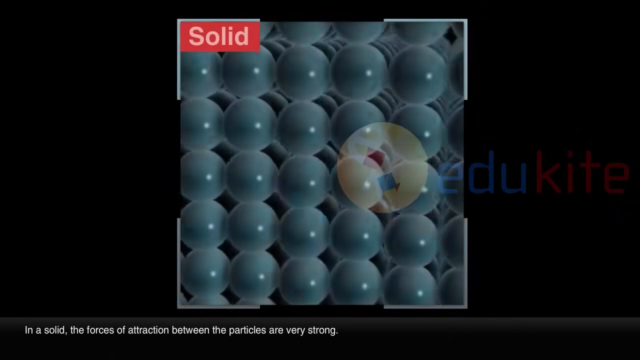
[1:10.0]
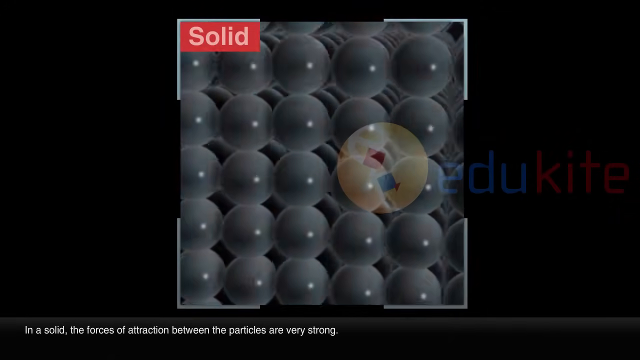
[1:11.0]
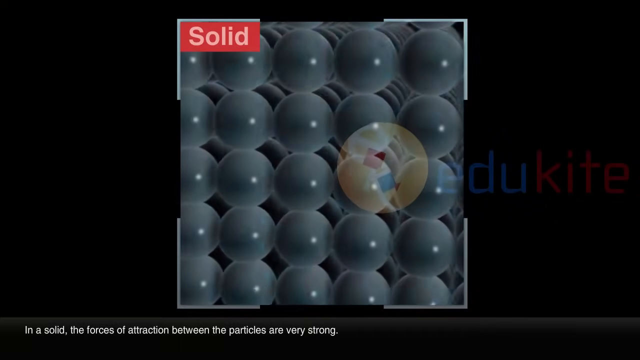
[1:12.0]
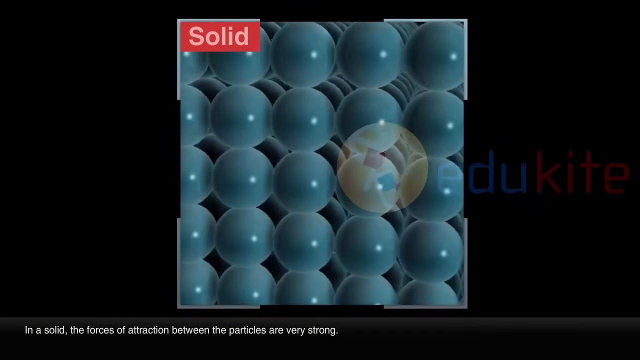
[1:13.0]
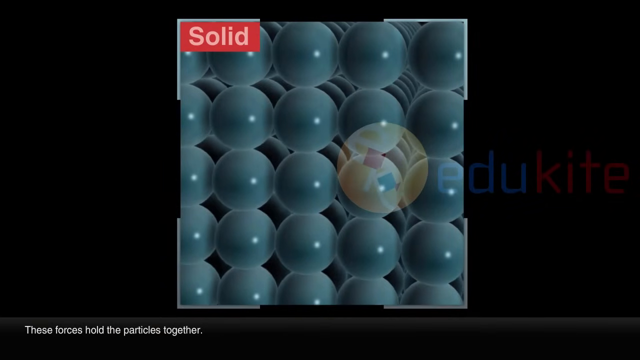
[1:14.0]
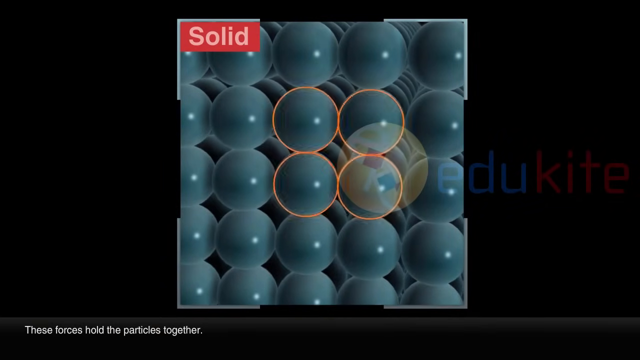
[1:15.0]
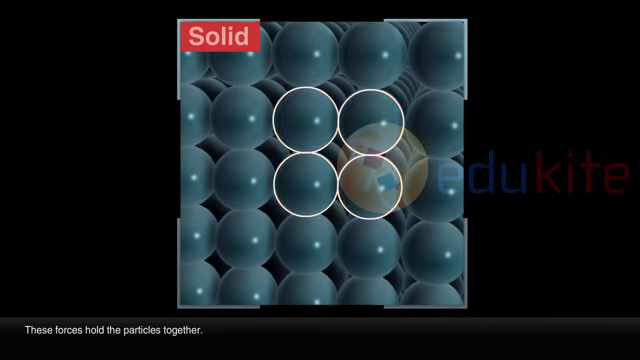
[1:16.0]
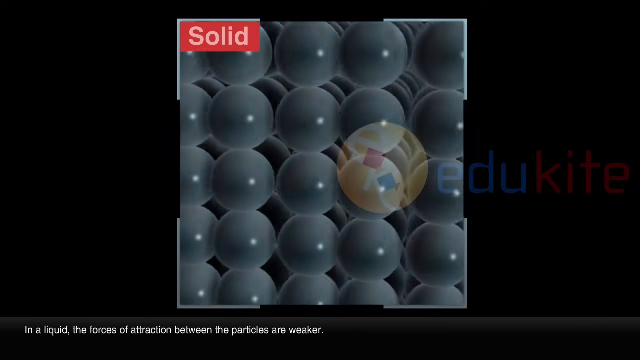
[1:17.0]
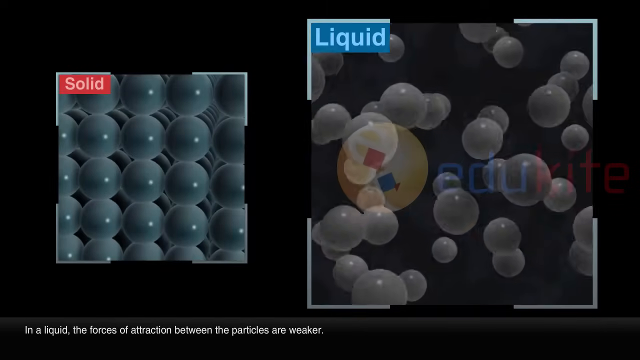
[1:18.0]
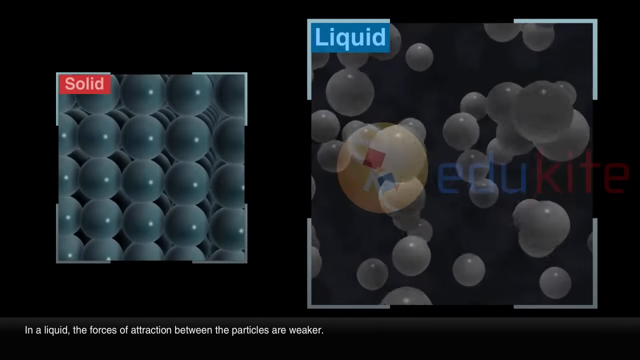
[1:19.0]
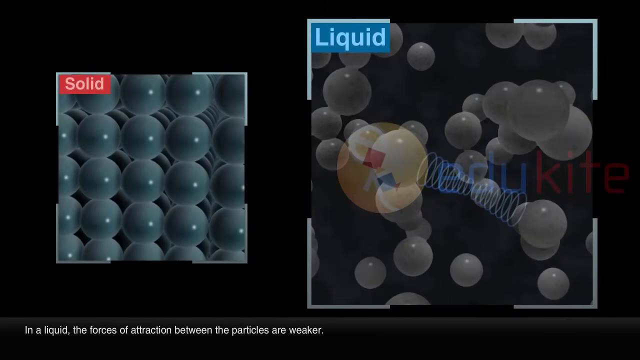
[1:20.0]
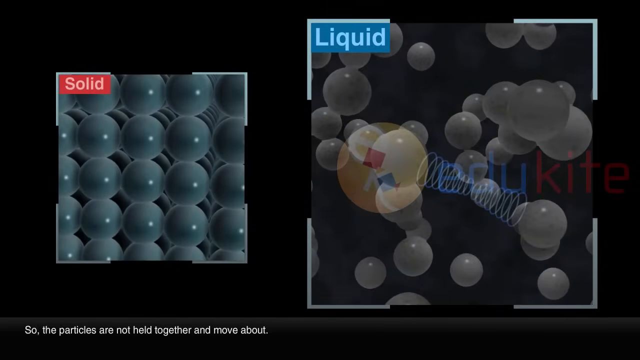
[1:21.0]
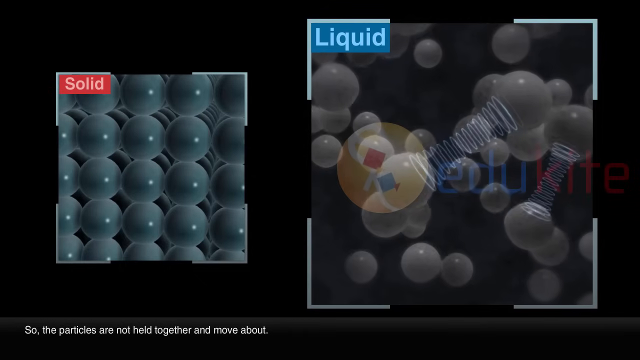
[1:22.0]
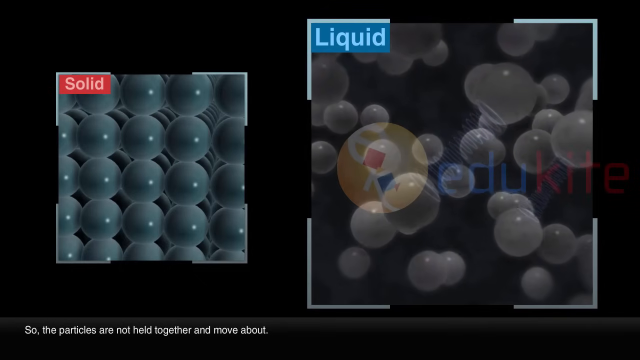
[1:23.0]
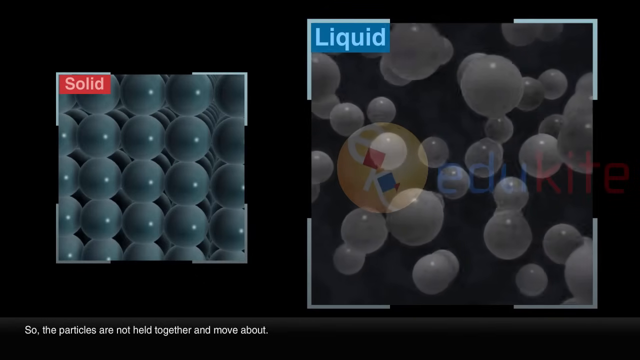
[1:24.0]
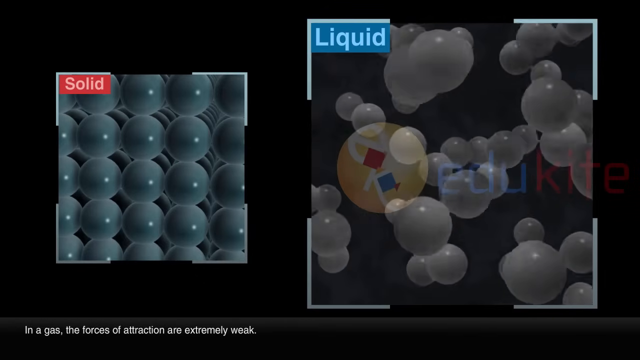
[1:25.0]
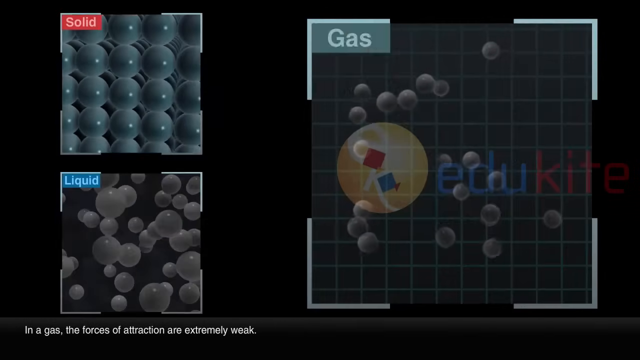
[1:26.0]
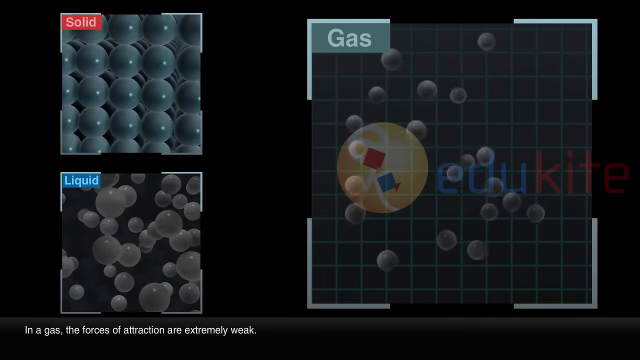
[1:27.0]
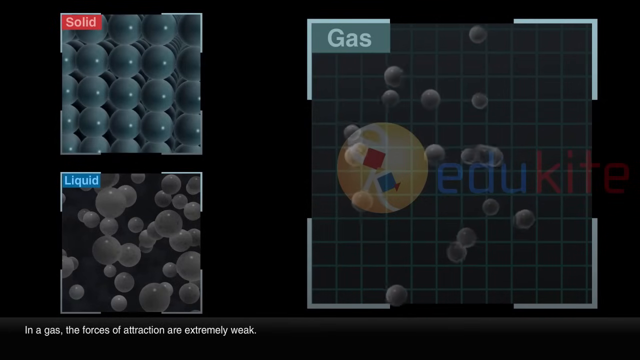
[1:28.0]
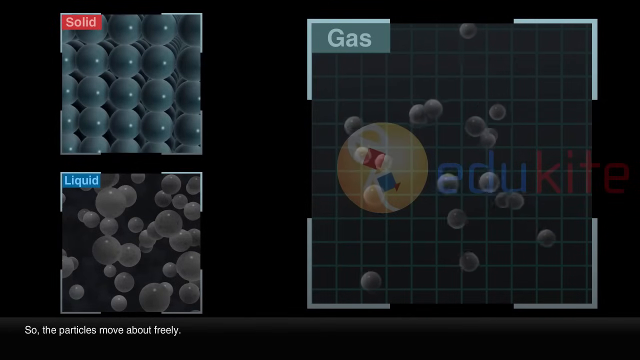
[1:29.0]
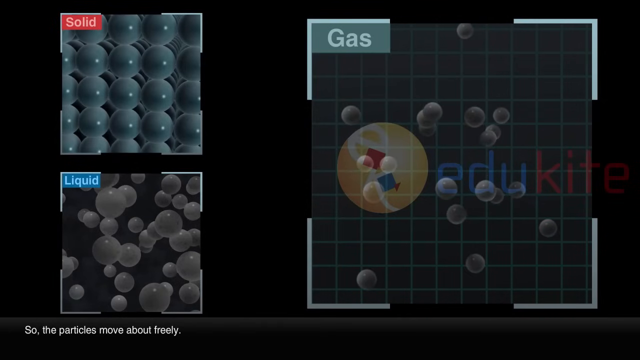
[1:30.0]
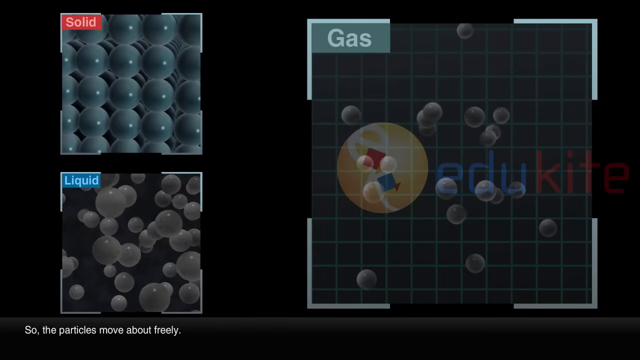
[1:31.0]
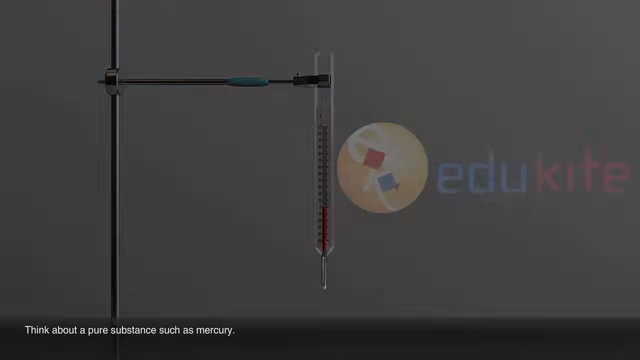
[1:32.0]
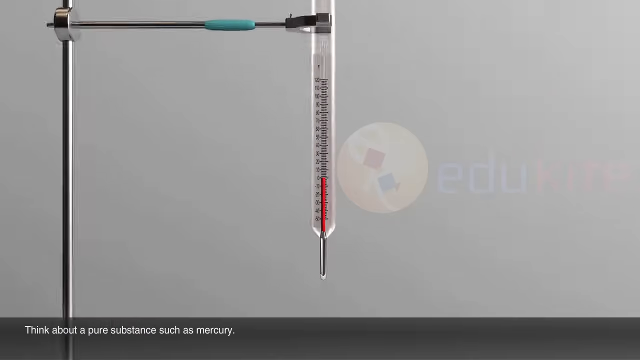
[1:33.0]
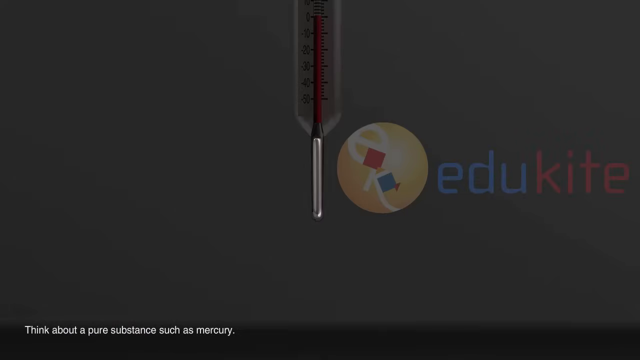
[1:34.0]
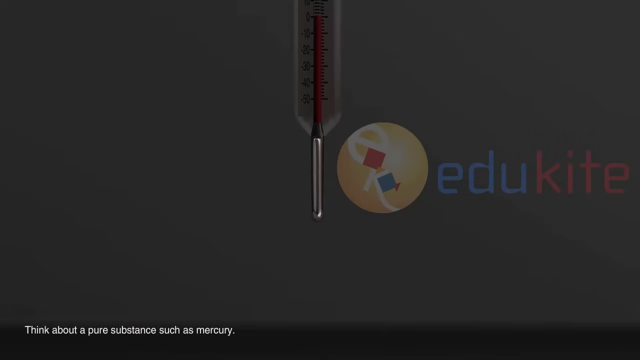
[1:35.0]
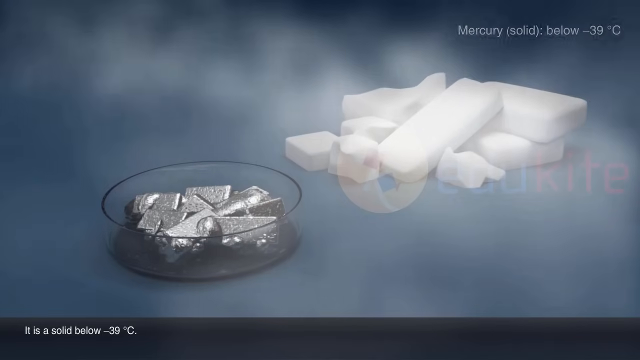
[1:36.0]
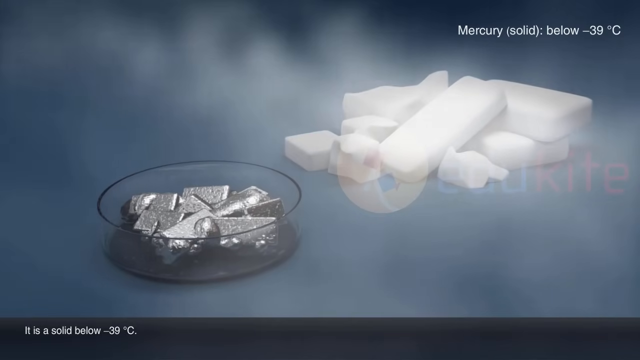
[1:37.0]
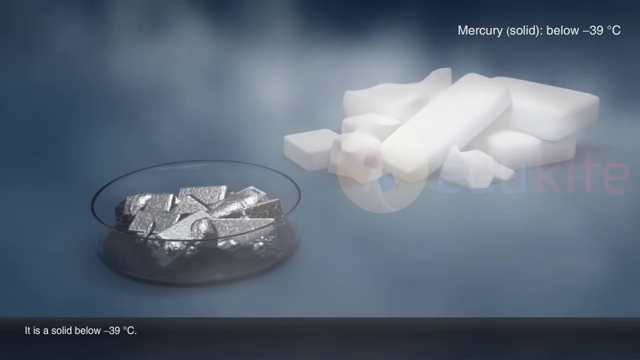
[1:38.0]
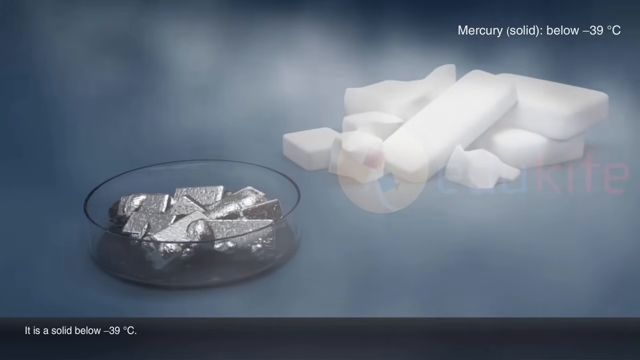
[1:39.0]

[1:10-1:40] On a black background, a square in the middle has a red rectangle at its top left reading "solid" in white text. Inside the square is what looks like a lattice of many spheres packed tightly into each other, right next to each other with no space to move, around 20 in the front. White text at the bottom reads "in a solid the forces of attraction between the particles are very strong." The spheres appear to vibrate in place, glowing blue and gray. The white text then reads "these forces hold the particles together," and an orange circle is drawn around four spheres next to each other in the middle, at top left, top right, bottom left and bottom right; the circles glow orange and white. The solid square gets smaller and slides to the left, and a big square appears on the right with the white text "liquid" at its top left. White text at the bottom reads "in a liquid the forces of attraction between the particles are weaker." Around 20 to 30 spheres float around freely in this square, and between two of them there looks like a spring, with what look like springs between a few more pairs, apparently showing weak attraction forces. The solid square moves to the top left and the liquid square to the bottom left, and another big square appears on the right with "gas" in a green rectangle at its top left. White text at the bottom reads "in a gas the forces of attractions are very extremely weak." There appear to be around 10 to 15 very small spheres floating very freely in a very open space. The white text then says "so the particles move about freely." The video transitions to what looks like a tubular metal stand on the left side with an arm sticking out, holding what looks like a thermometer, red, with a pipette at the bottom, on the right side facing downward. White text at the bottom reads "think about a pure substance such as mercury." The view zooms into the tip, which appears gray and glows a bit. The video then transitions to a picture of what looks like a Petri dish with some silver-looking blocks inside, with what looks like dry ice at the top right. White text at the top right reads "mercury solid below minus 39 degrees Celsius," and white text at the bottom reads "it is a solid below negative 39 degrees Celsius." The video zooms in slowly on the picture of the mercury.